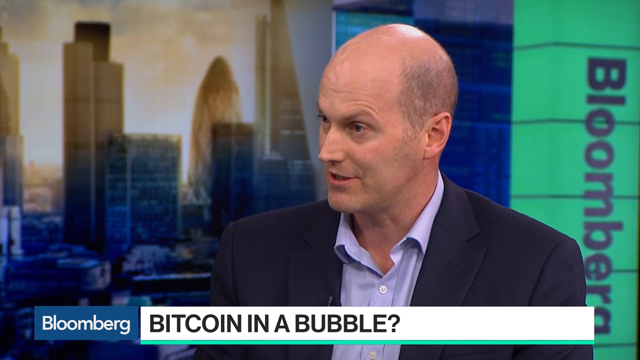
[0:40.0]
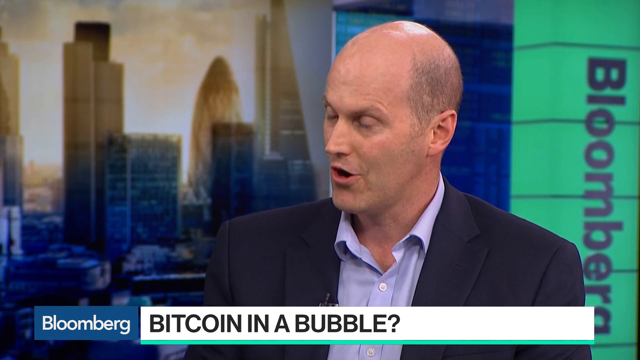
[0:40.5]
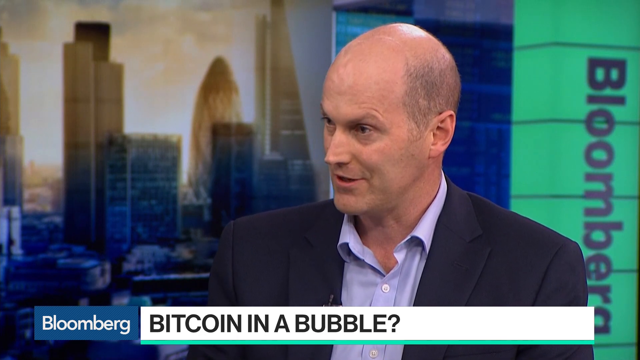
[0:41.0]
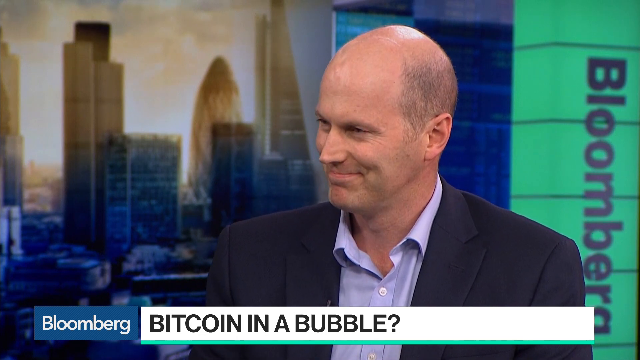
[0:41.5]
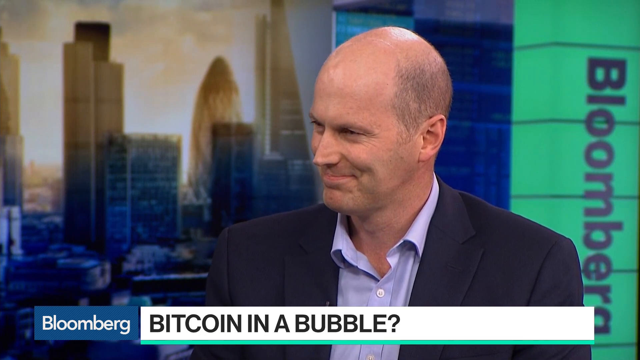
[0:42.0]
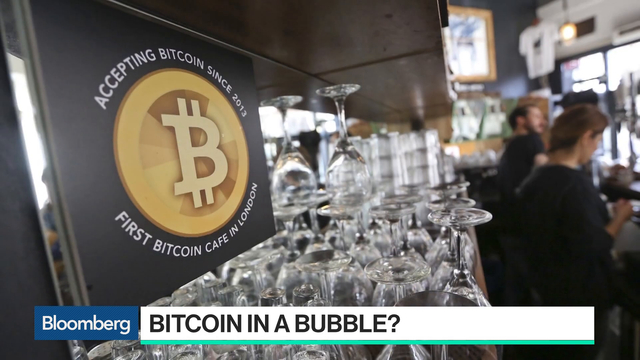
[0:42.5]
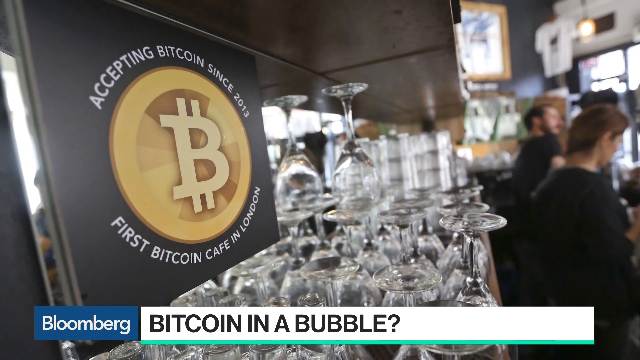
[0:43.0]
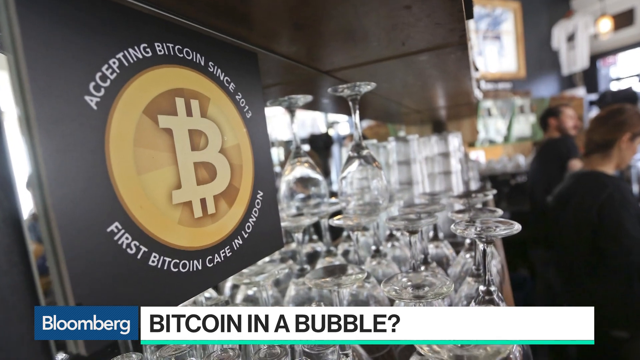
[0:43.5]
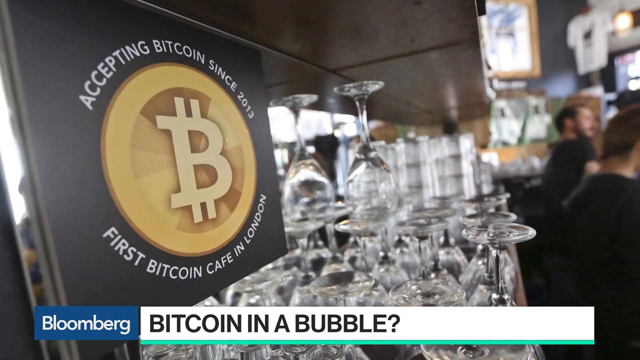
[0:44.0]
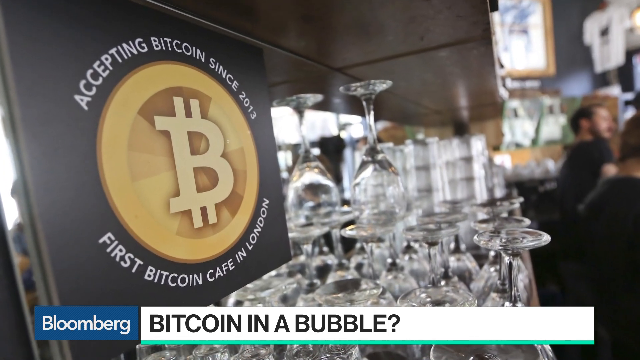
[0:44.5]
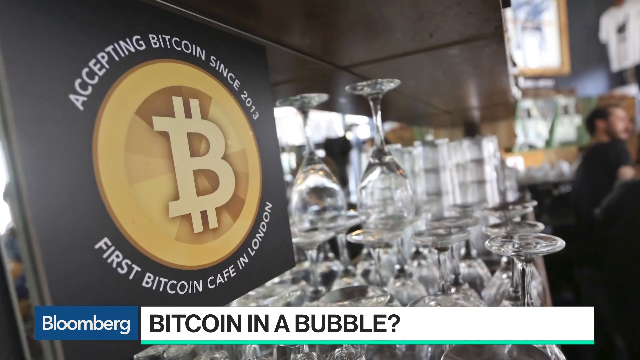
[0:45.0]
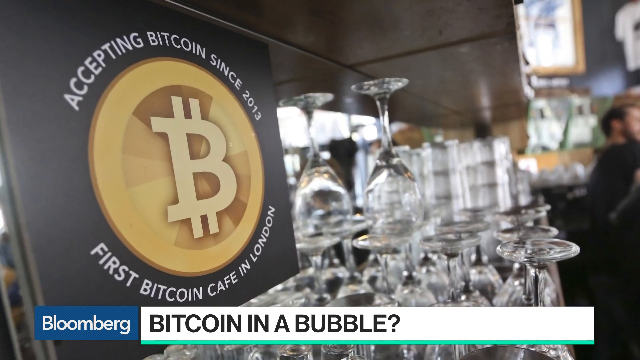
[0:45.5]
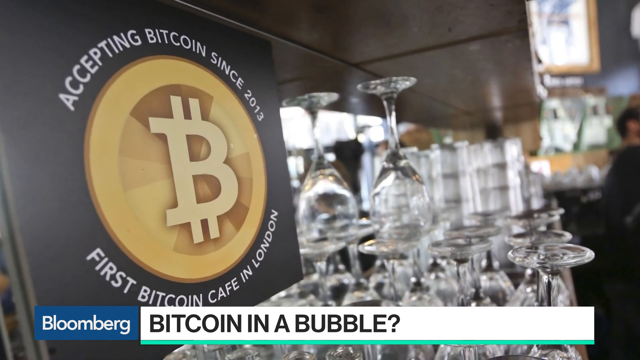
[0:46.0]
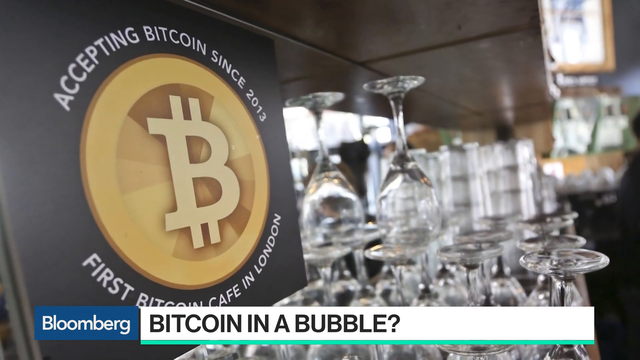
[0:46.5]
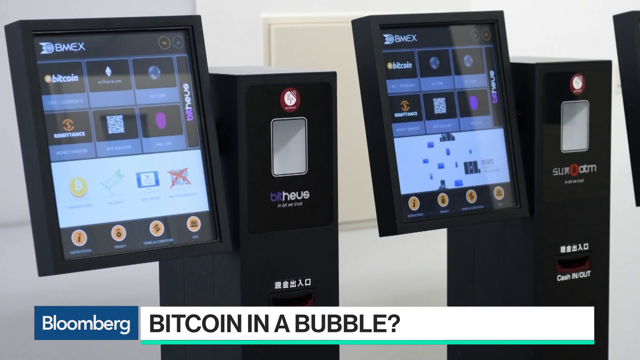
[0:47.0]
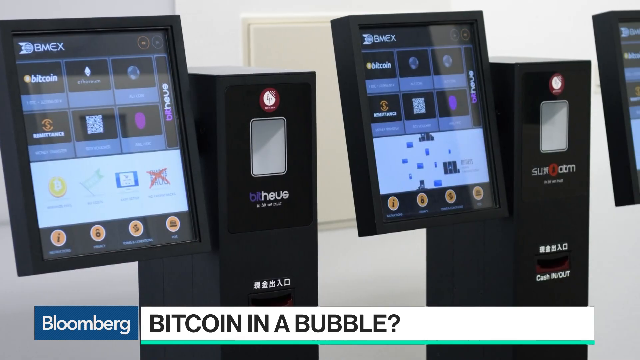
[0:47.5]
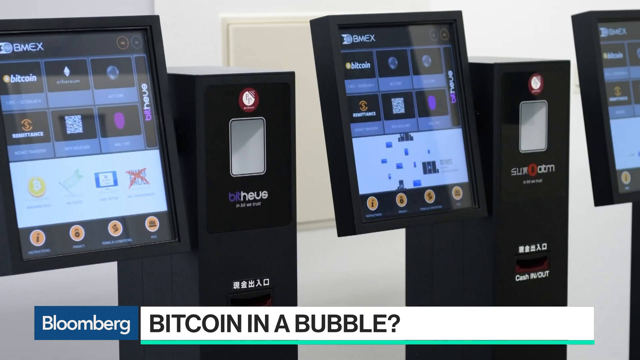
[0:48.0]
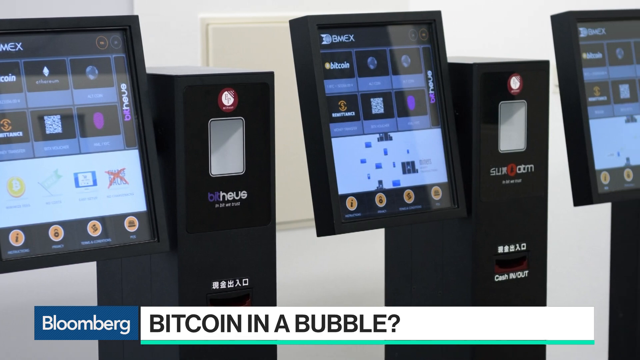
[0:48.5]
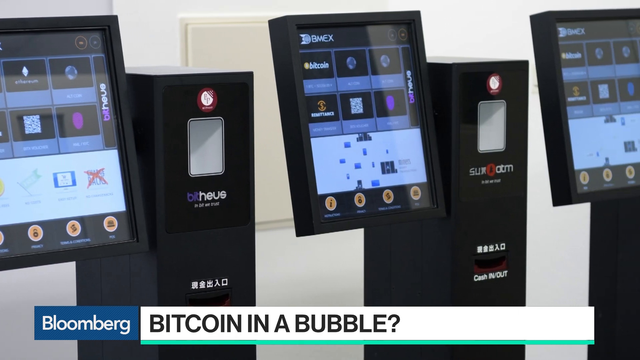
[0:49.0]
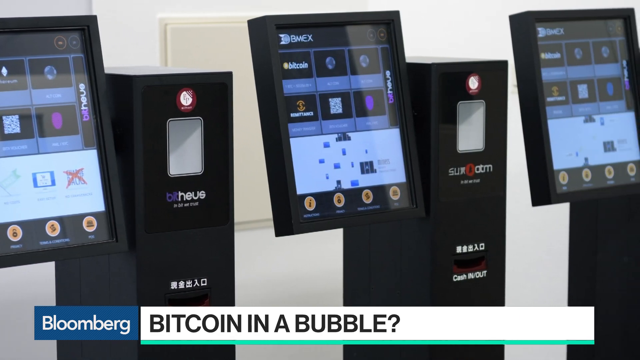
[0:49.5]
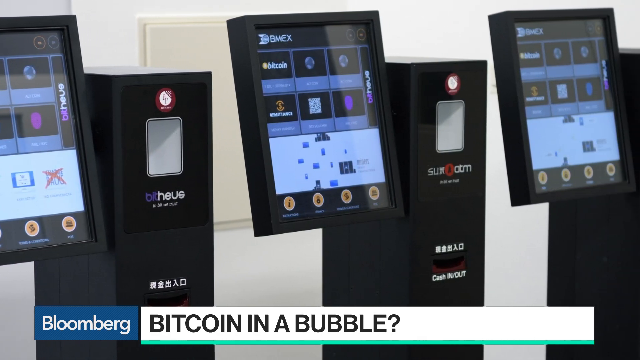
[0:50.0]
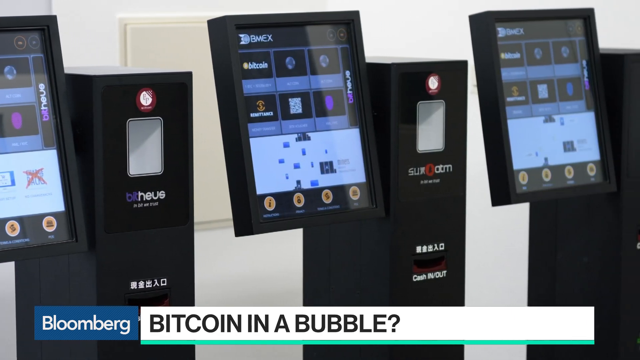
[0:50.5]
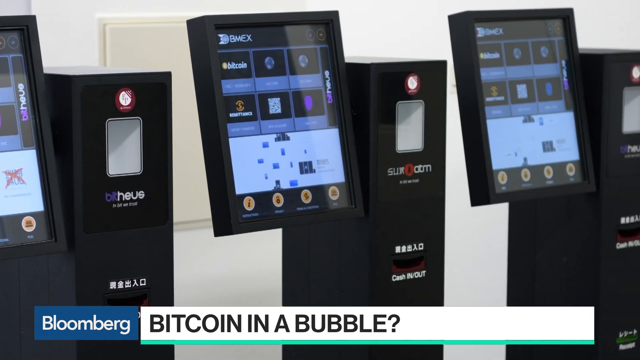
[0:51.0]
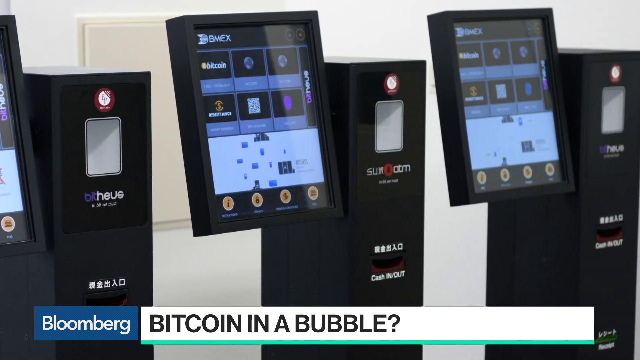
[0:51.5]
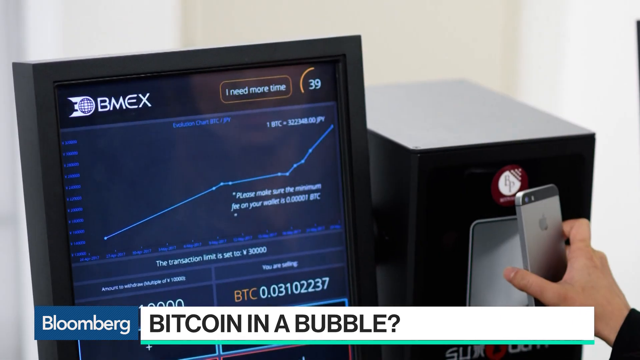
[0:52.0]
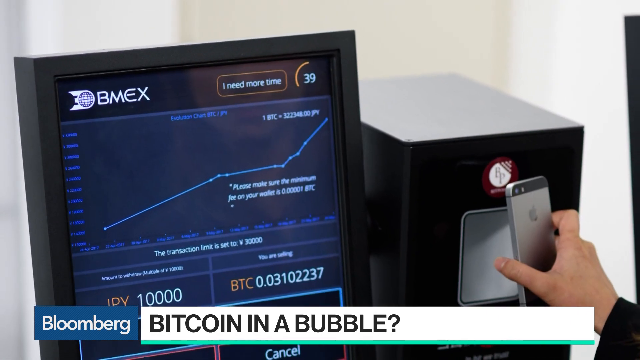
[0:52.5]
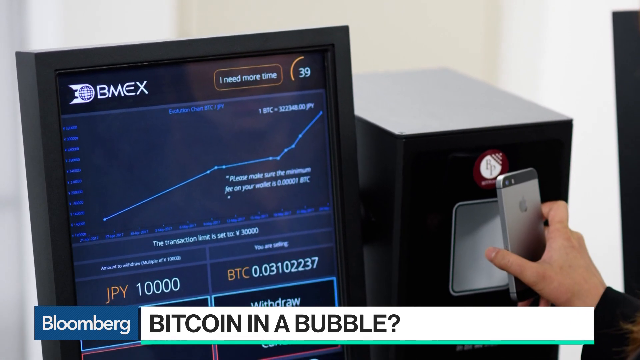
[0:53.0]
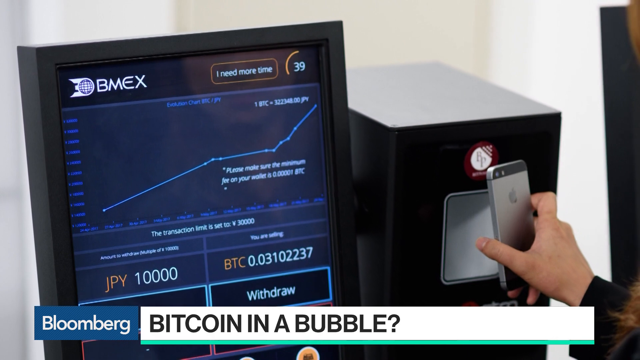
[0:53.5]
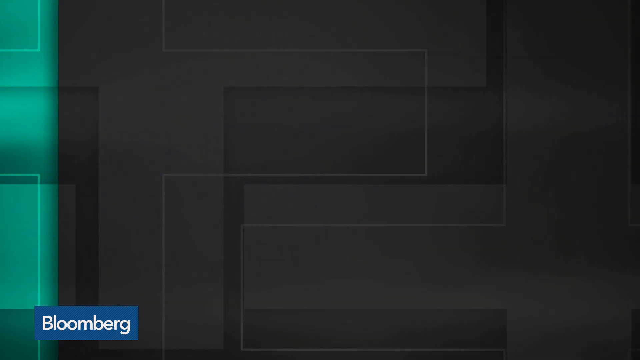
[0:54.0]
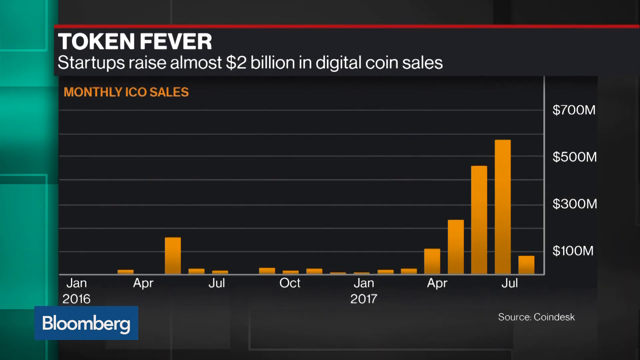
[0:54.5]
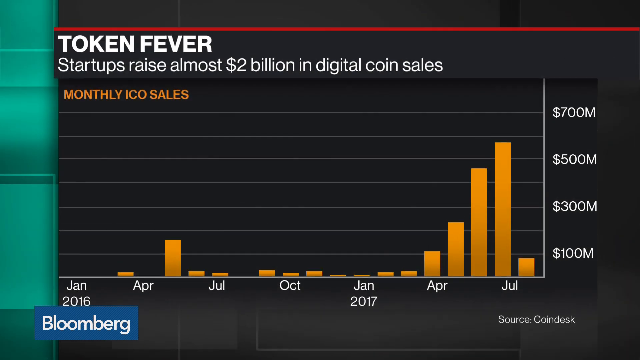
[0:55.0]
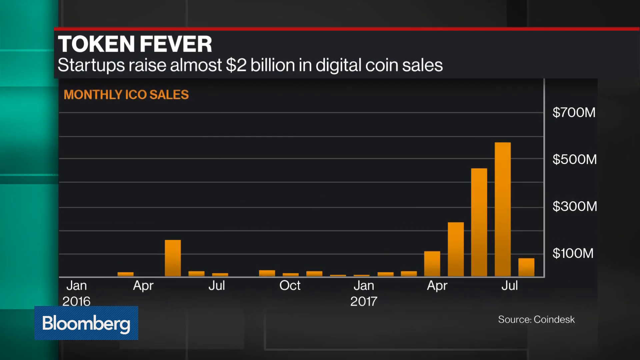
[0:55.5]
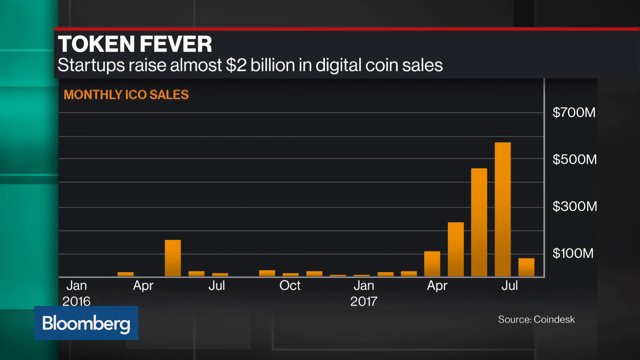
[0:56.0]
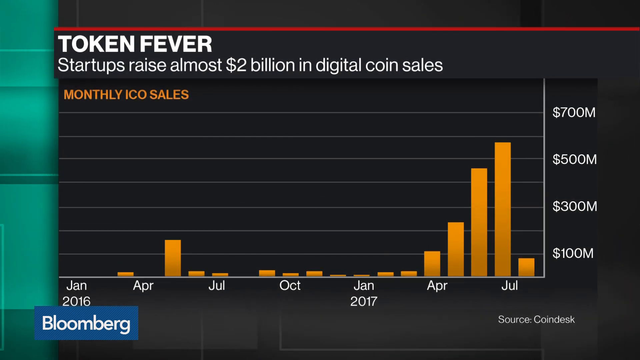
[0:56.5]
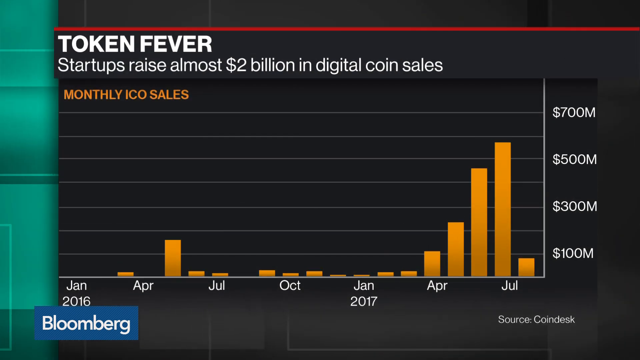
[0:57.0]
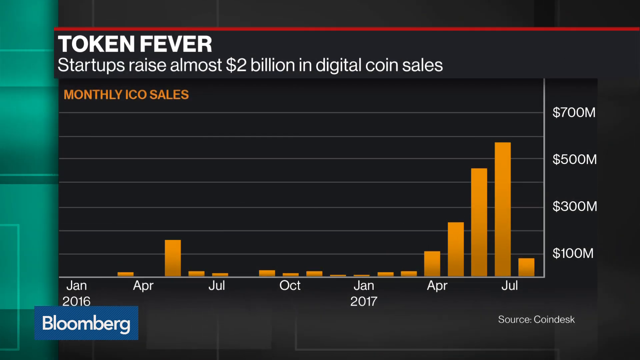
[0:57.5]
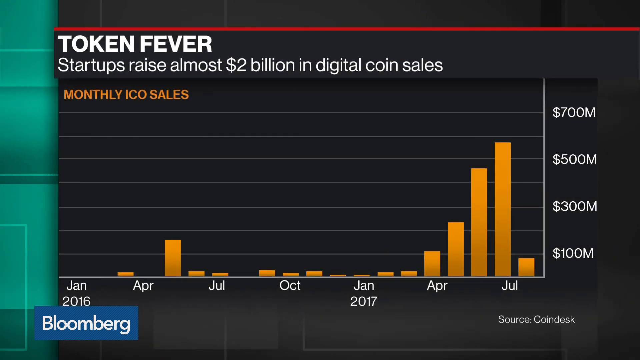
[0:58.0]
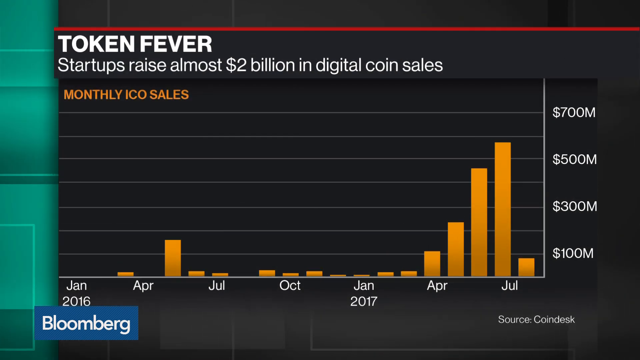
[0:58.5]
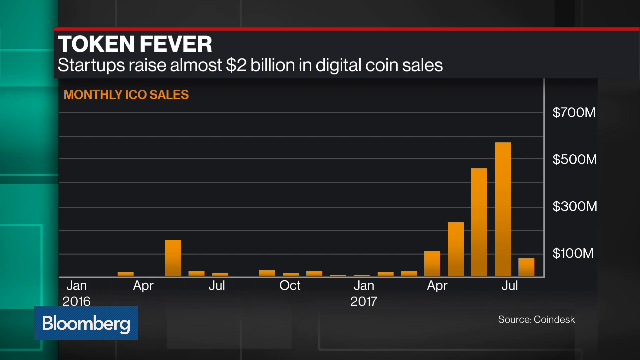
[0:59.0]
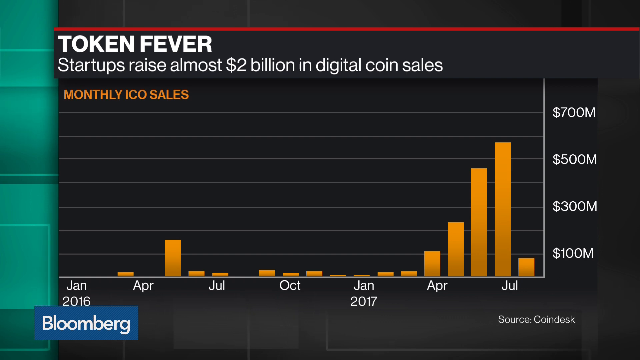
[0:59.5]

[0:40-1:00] Ben Brabyn is still shown talking briefly in the news studio, with the caption "Bitcoin in a bubble" below him. The video then quickly switches to another room where there seem to be lots of glasses packed up and people appearing on the screen, and a huge logo of a Bitcoin sign reading "accepting bitcoin since 2013 first bitcoin cafe in london." Next, LCD screens display what seem like trading platforms. The video then switches to a bar graph with a caption reading "token fever startups raise almost two billion dollars in digital coin sales monthly ico sales." The y-axis seems to show money in dollars, and the x-axis seems to show months: April, July, October, January, April, July. The bar chart remains on screen as the shot ends.